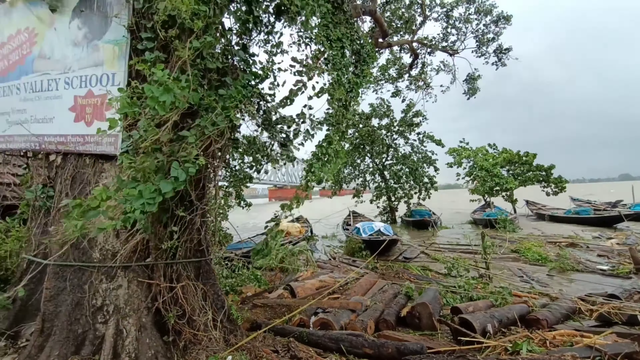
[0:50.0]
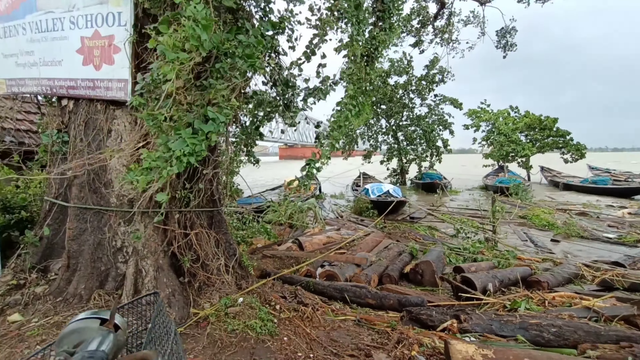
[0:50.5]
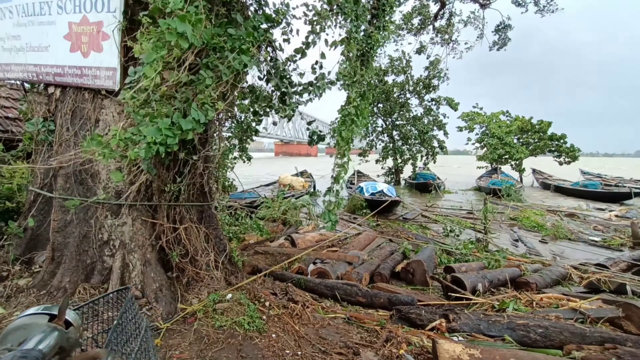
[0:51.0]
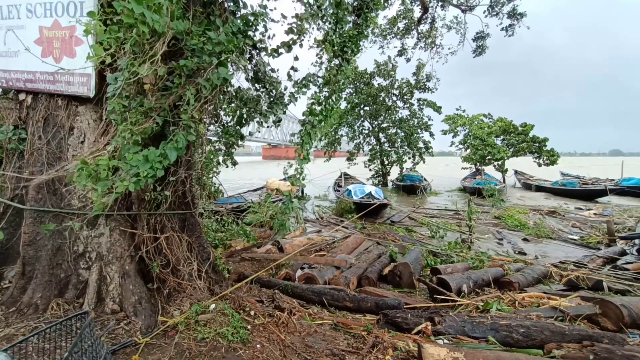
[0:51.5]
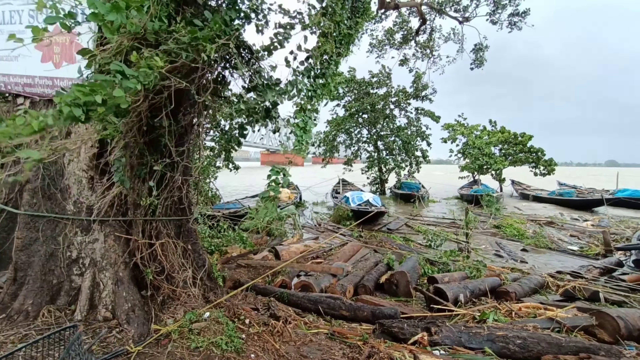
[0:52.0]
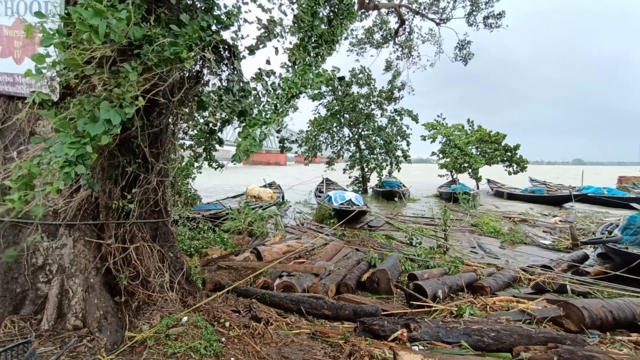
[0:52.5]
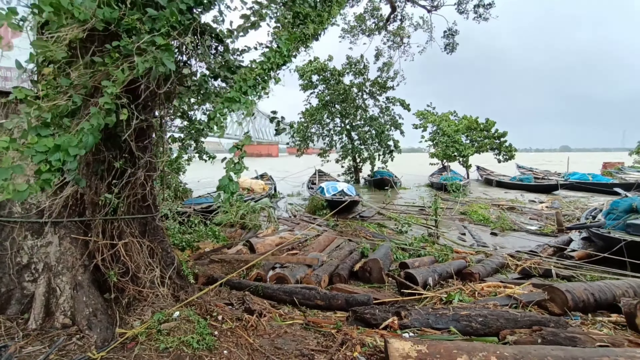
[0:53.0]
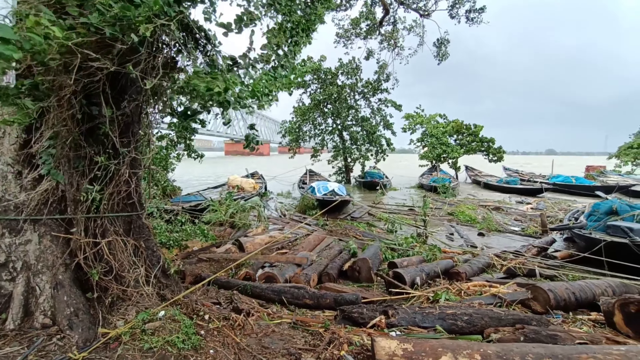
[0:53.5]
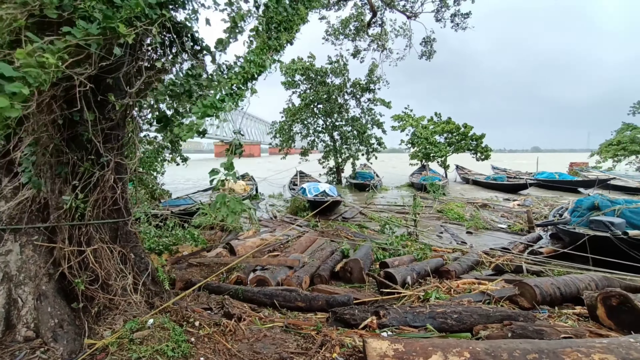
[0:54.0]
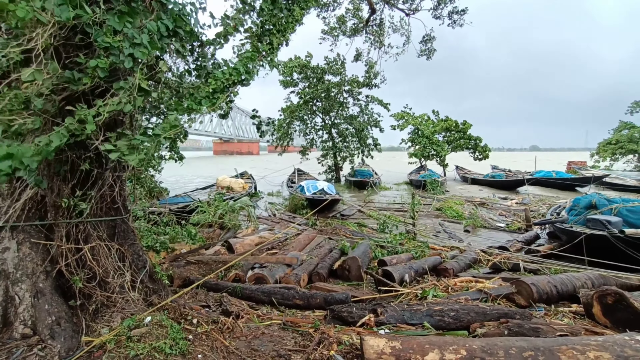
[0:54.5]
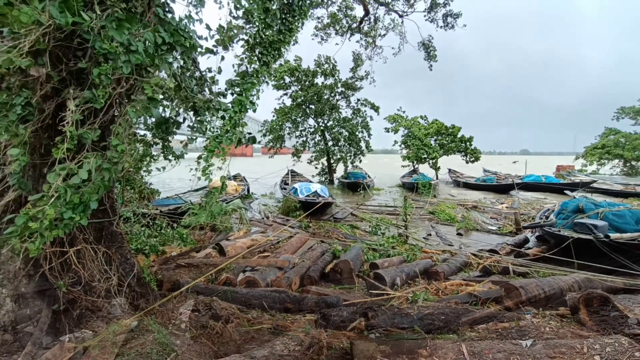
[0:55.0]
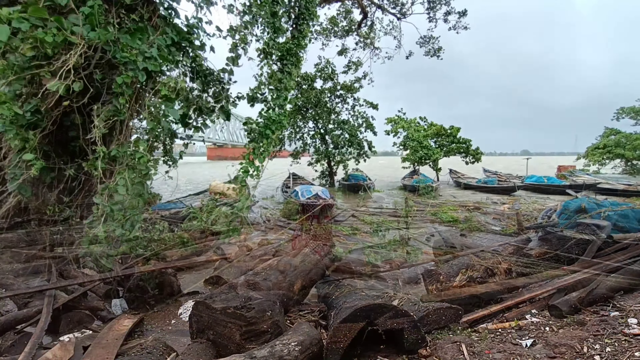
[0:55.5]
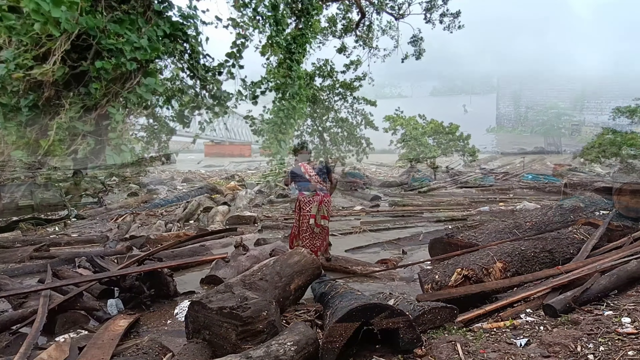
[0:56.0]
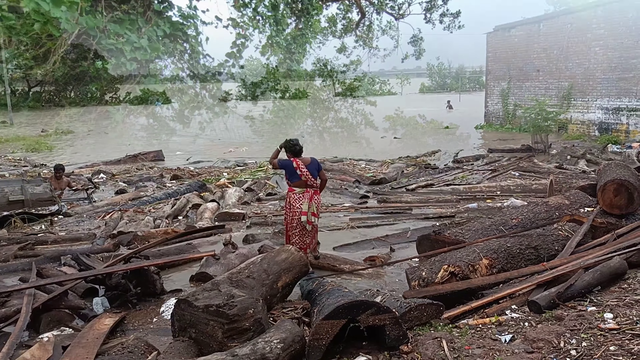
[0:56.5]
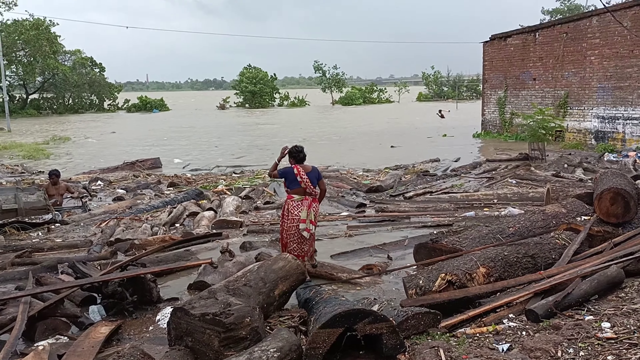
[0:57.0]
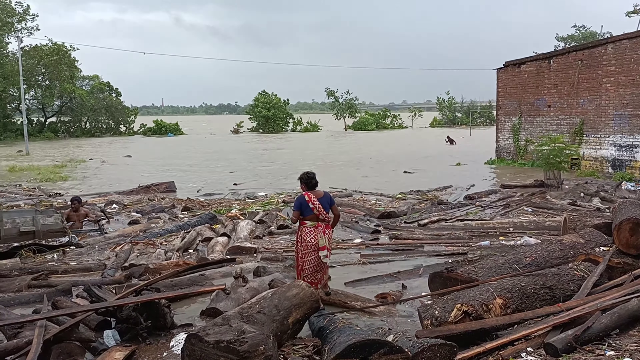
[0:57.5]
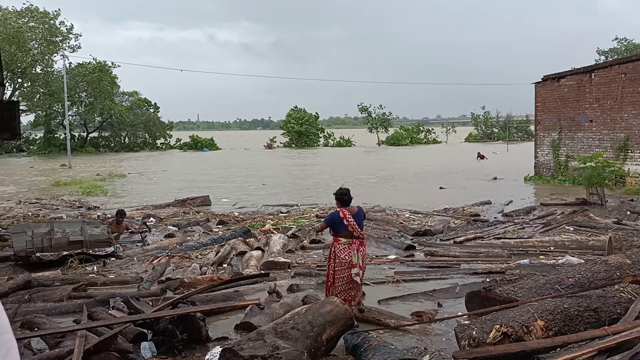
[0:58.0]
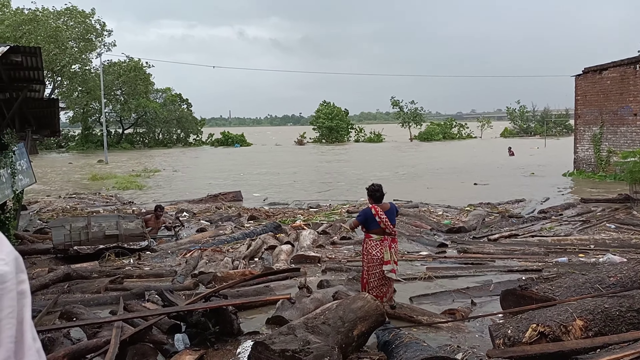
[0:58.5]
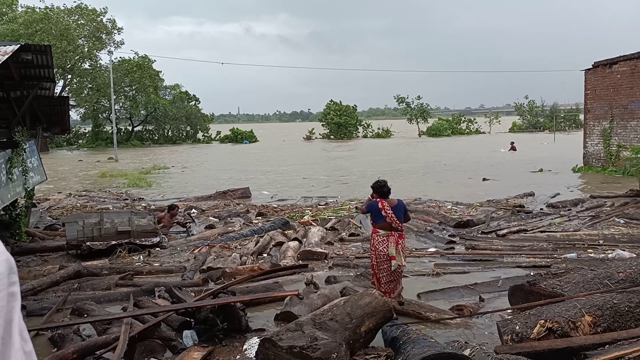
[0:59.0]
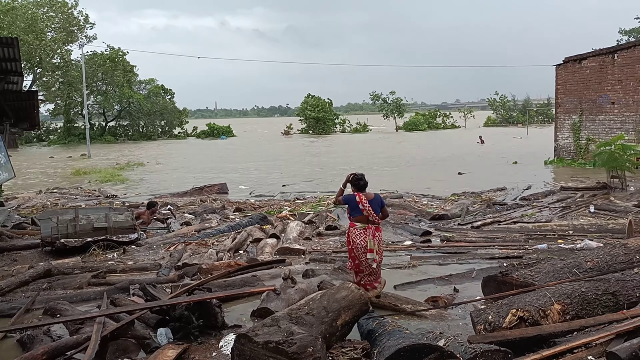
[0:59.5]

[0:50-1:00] The boats are lined up at the dock, and the wind is even stronger. The water has risen so high that people are swimming in it, and many trees peep up out of the water. A woman appears, wearing a red patterned skirt that goes across her chest.